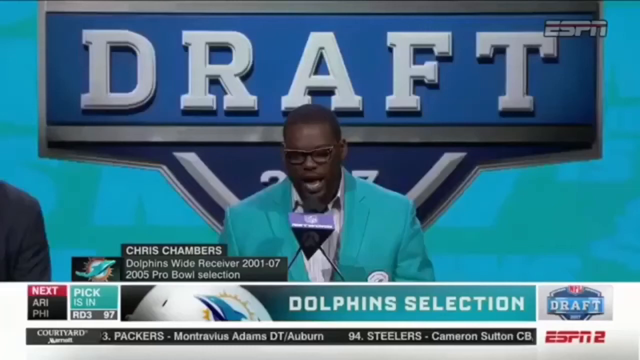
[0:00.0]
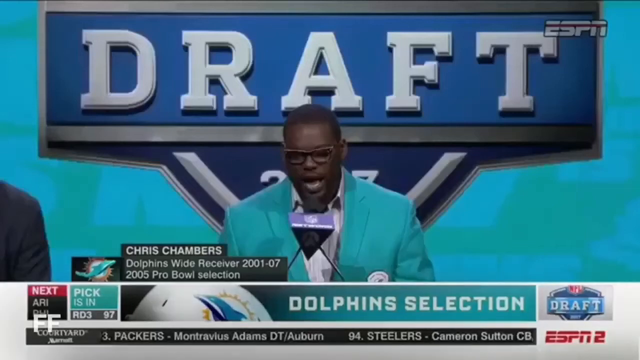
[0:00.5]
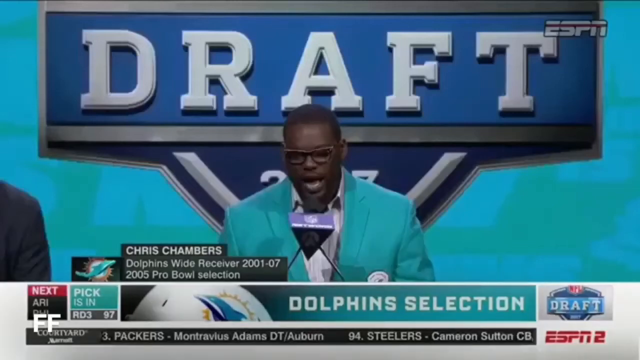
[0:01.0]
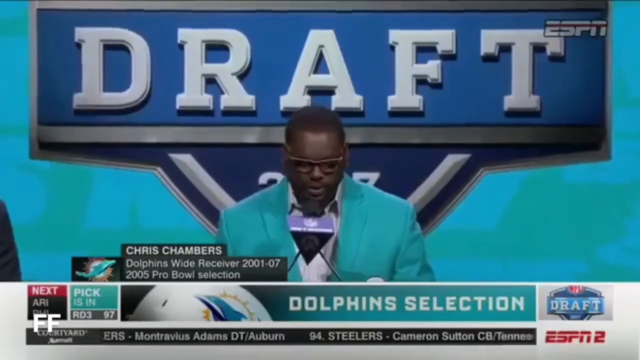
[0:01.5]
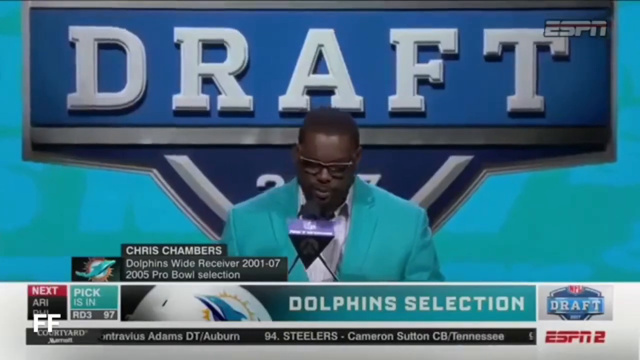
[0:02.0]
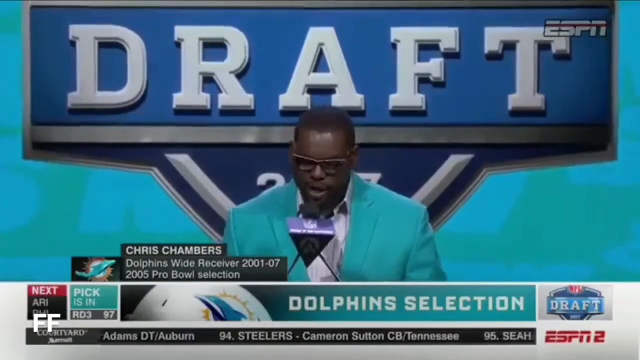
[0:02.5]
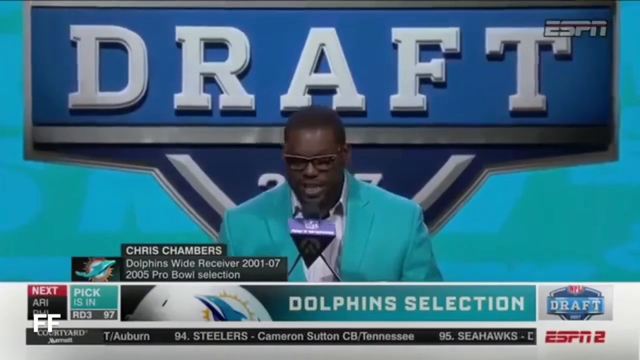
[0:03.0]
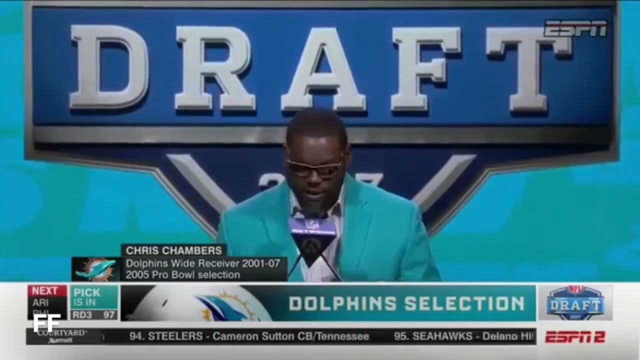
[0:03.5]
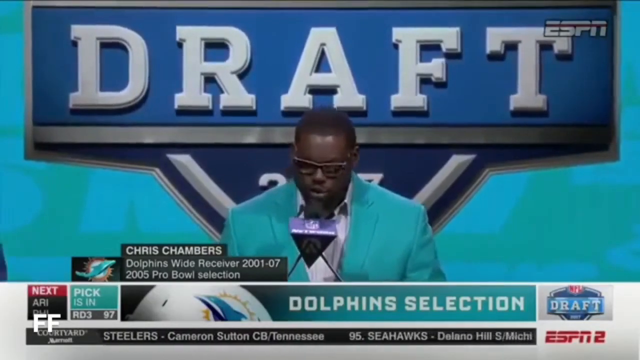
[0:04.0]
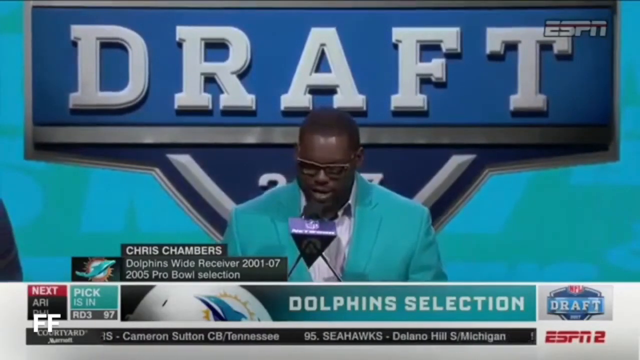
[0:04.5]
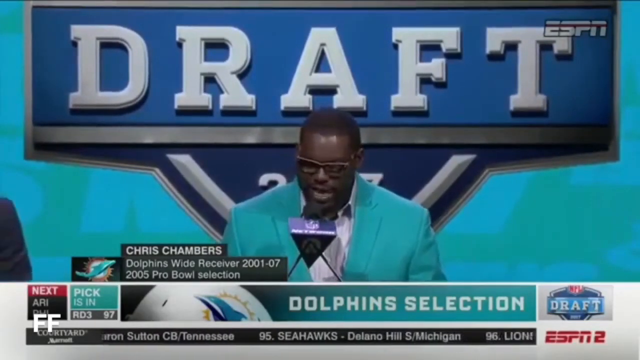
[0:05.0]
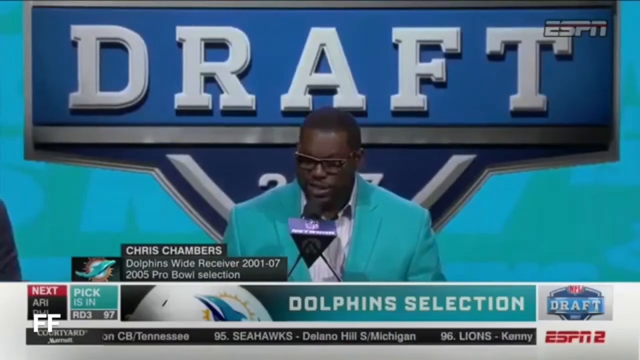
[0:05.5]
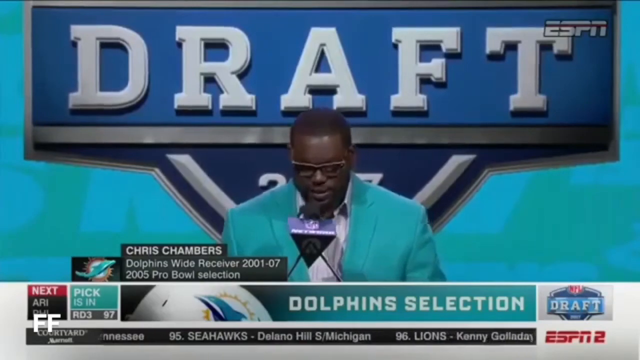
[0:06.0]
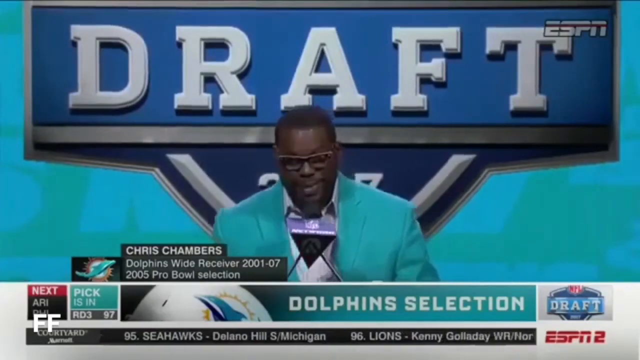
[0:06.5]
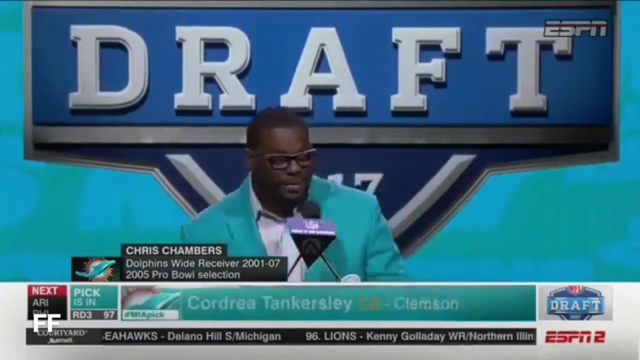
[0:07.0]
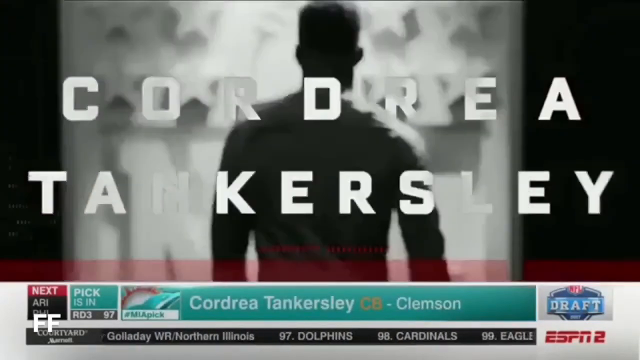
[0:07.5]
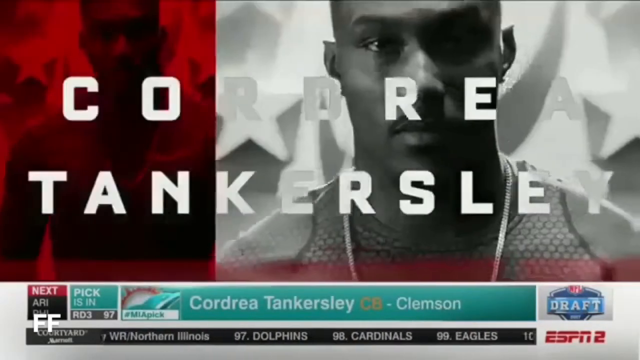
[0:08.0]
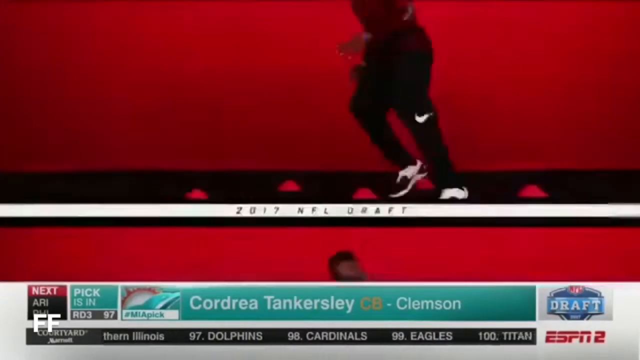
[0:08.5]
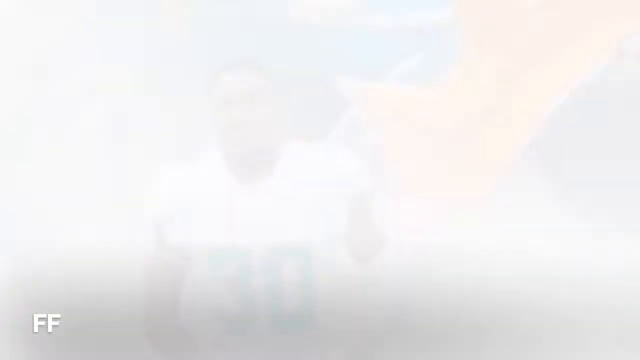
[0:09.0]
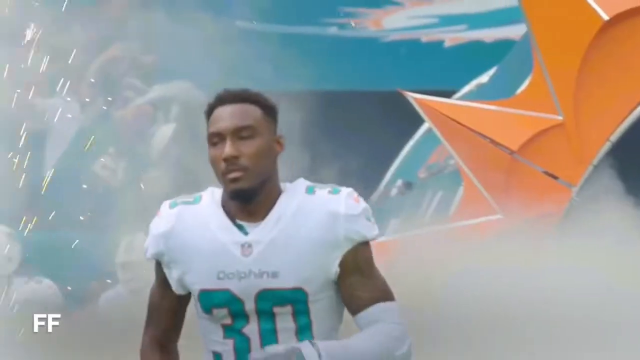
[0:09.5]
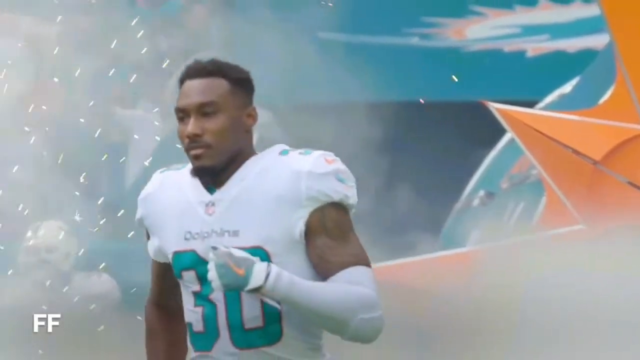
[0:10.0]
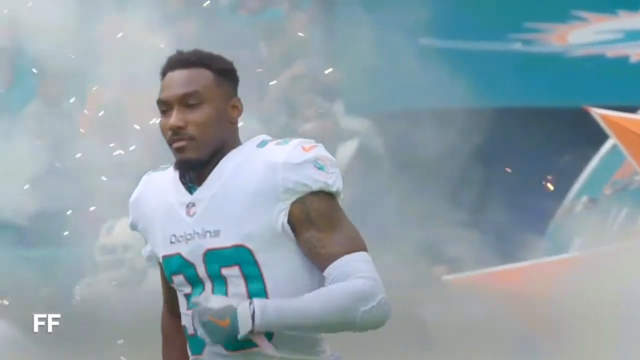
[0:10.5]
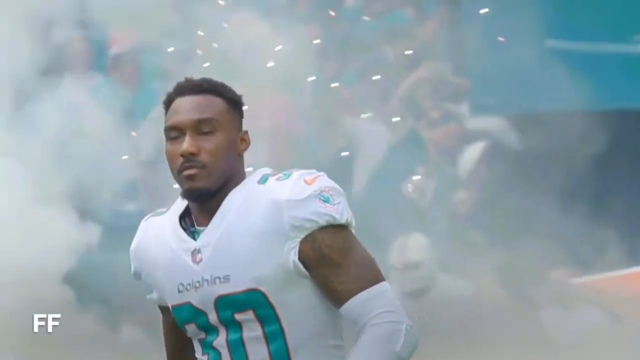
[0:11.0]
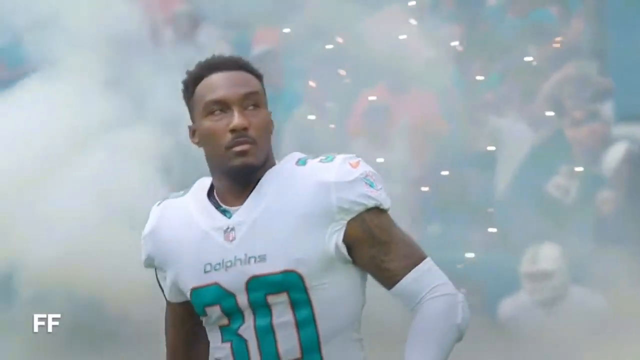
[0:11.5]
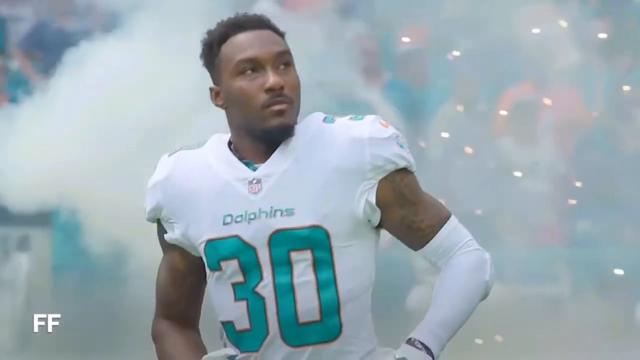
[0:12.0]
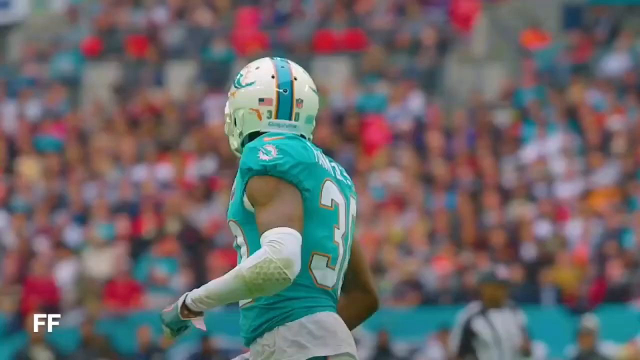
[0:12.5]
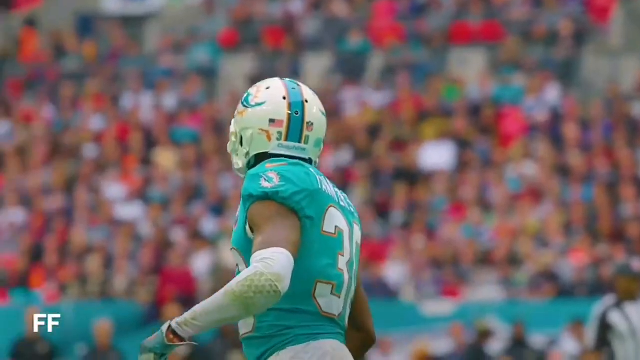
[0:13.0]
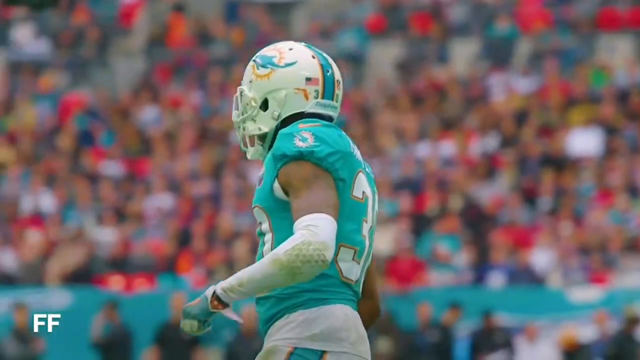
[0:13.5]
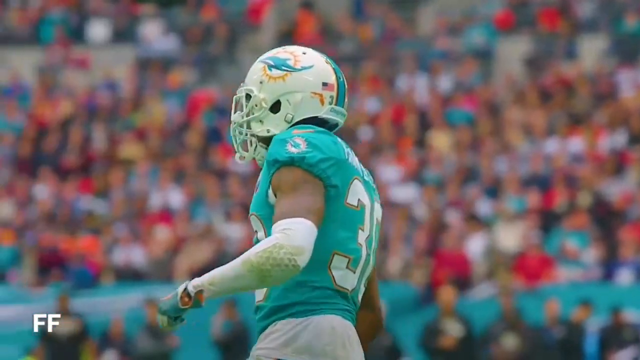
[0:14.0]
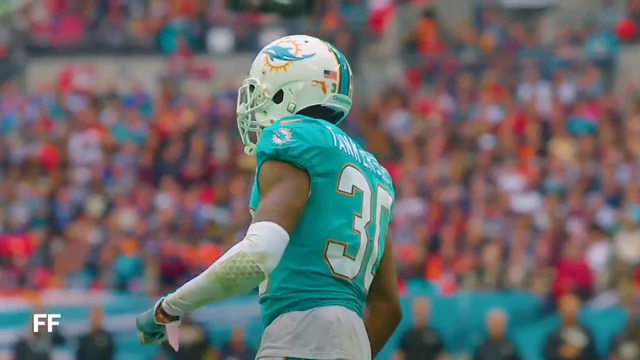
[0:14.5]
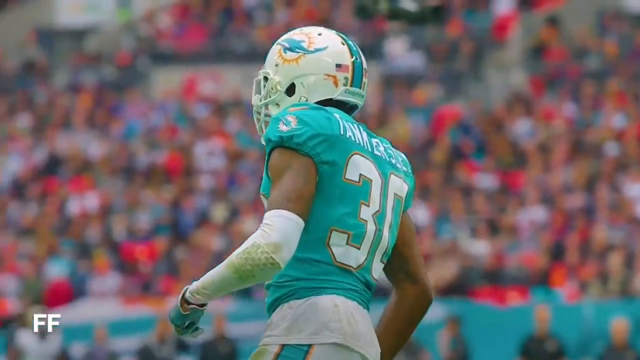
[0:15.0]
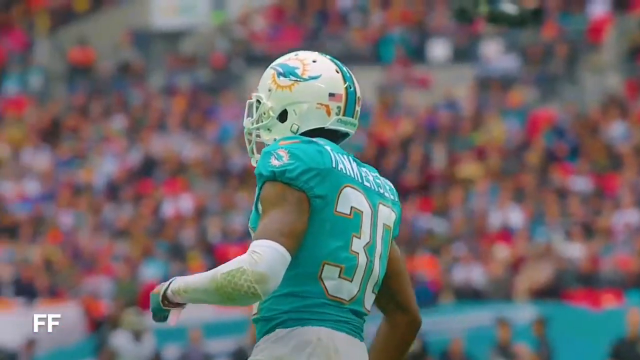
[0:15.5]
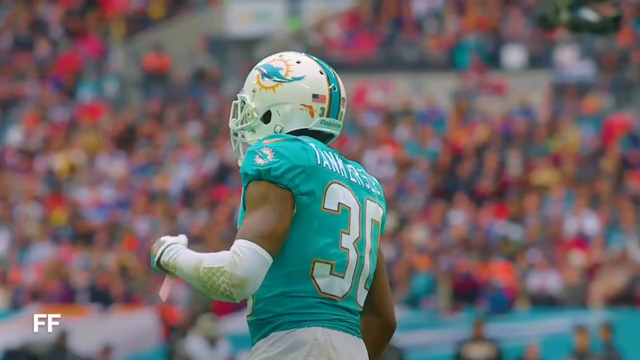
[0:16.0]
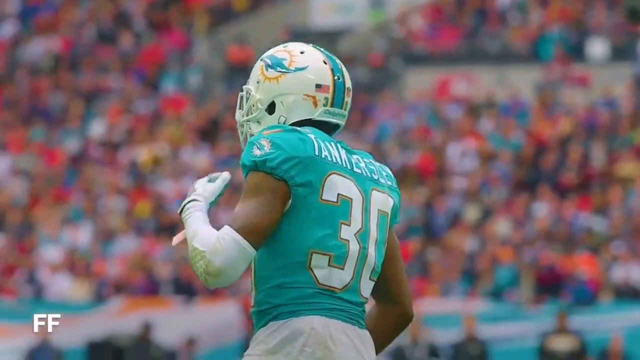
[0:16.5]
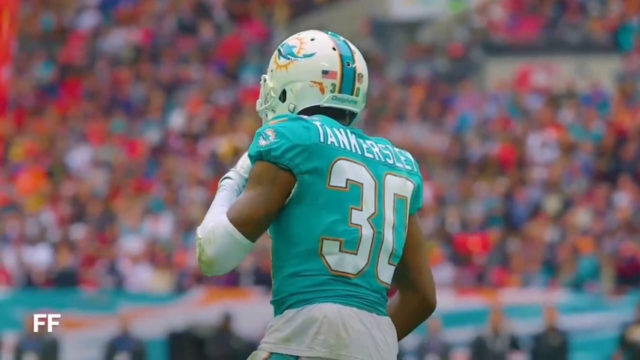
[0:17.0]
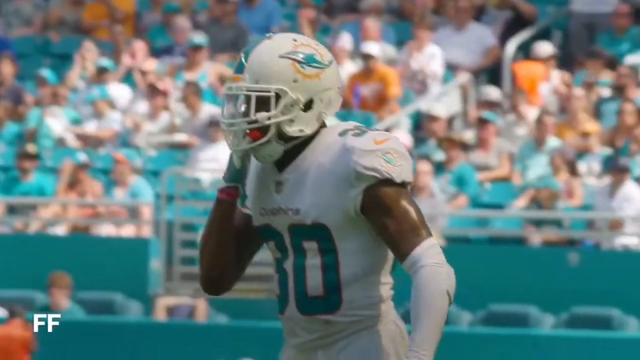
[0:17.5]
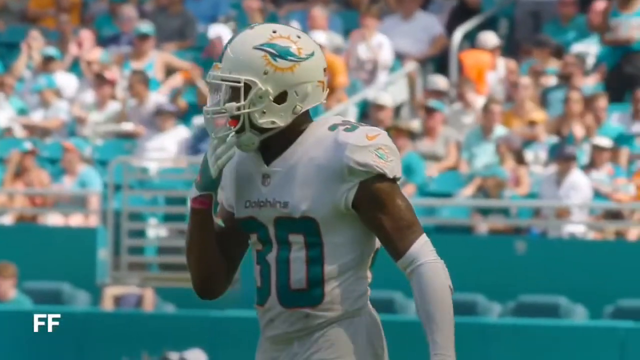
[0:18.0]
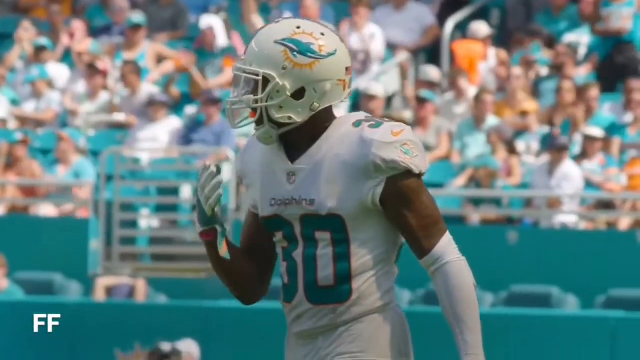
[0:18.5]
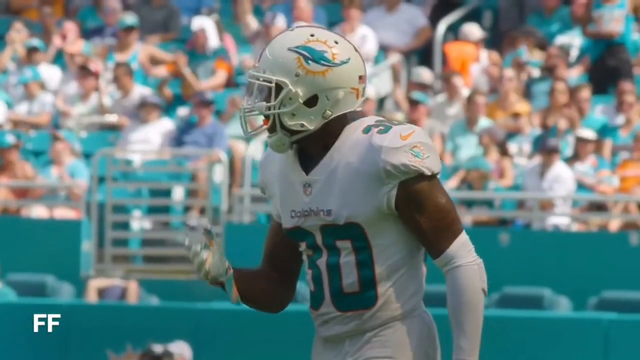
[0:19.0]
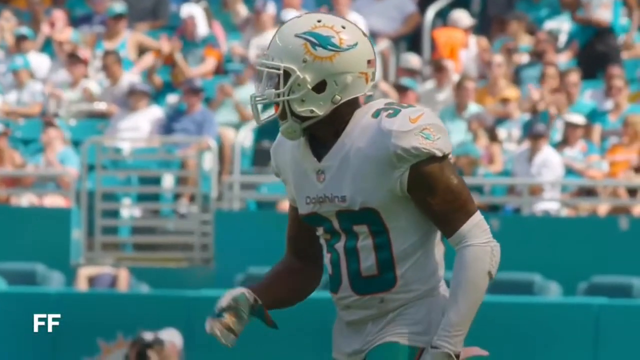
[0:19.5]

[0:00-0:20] Chris Chambers, who was apparently with the Dolphins from 2001 to 2007, appears, and the video seems to concern the Dolphins' recent draft pick. It then moves to what looks like a report showing clips of players, possibly from the draft, focusing on player number 30 for the Dolphins; it may or may not be Chris Chambers. Text at the bottom of the screen possibly says Arizona for Philadelphia, followed by the pick, but the rest is hidden by a bar. Text written over the bottom of the screen says the Miami pick is Cawdreya Tankersley, a CB, possibly the first pick, from Clemson, in the 2017 NFL draft.